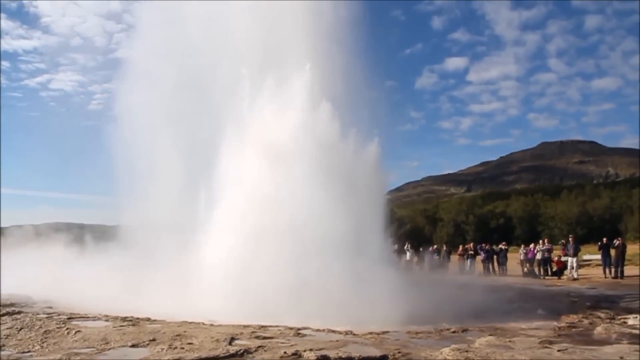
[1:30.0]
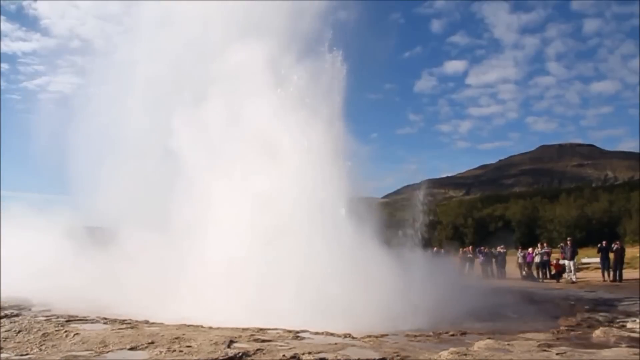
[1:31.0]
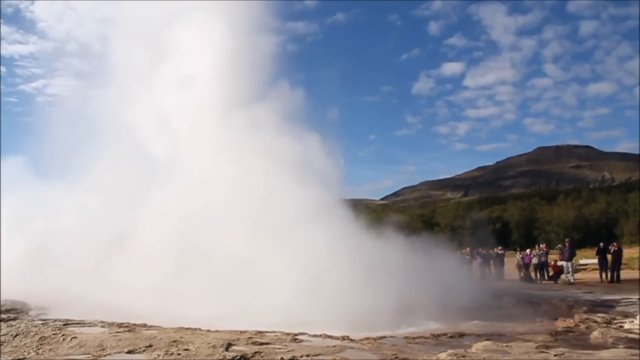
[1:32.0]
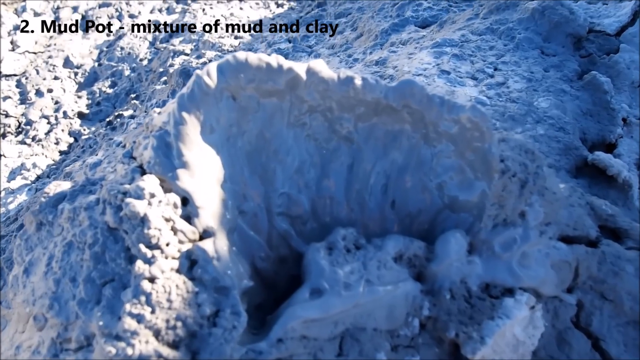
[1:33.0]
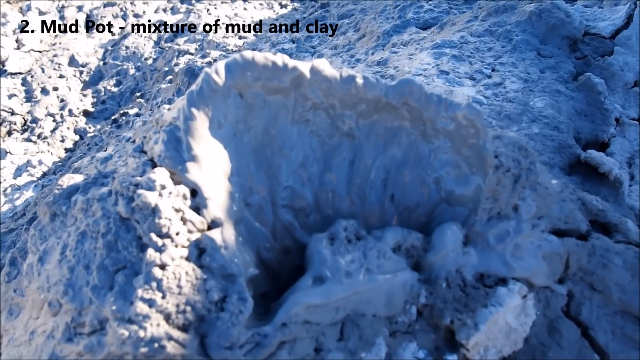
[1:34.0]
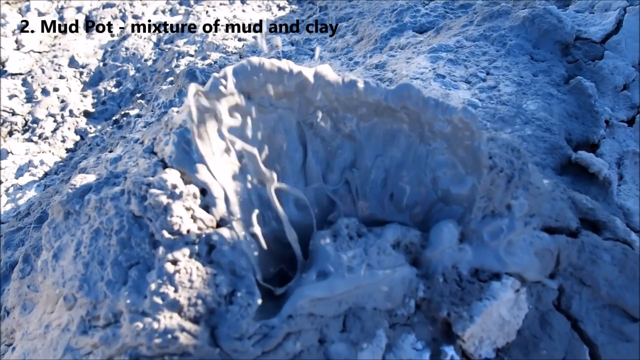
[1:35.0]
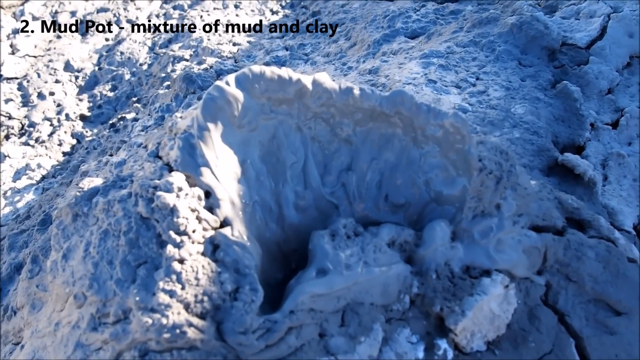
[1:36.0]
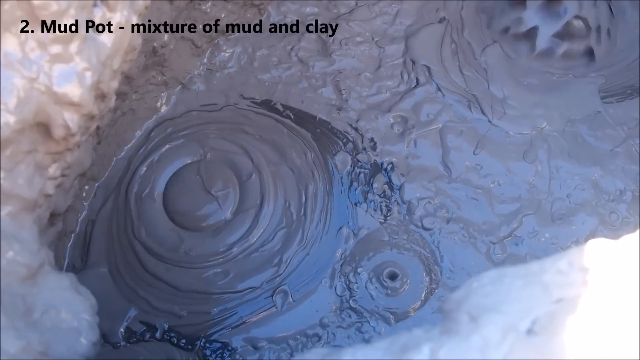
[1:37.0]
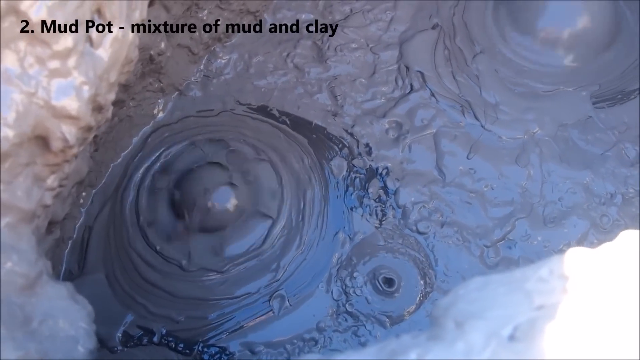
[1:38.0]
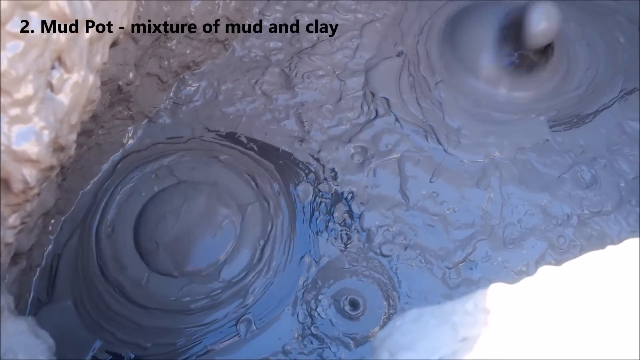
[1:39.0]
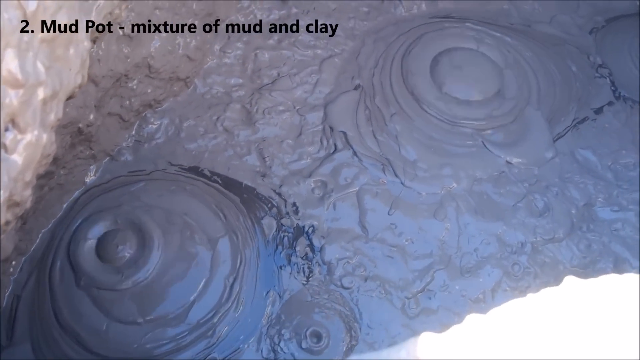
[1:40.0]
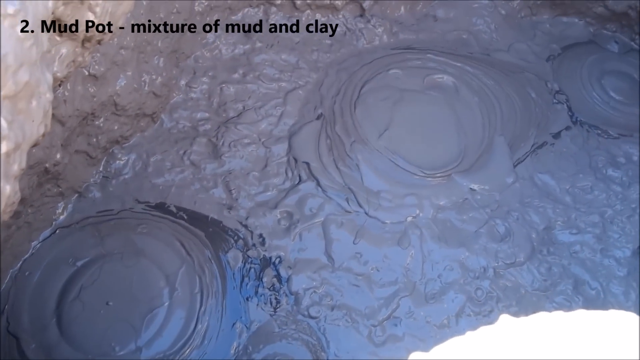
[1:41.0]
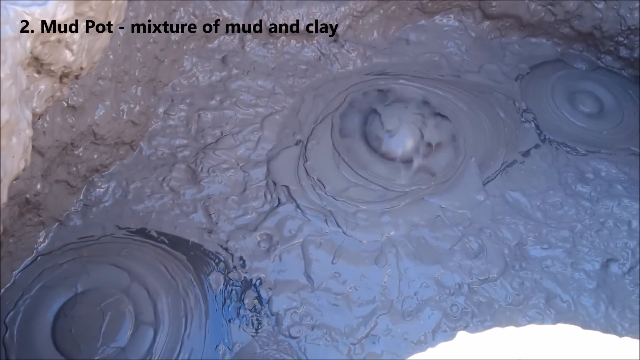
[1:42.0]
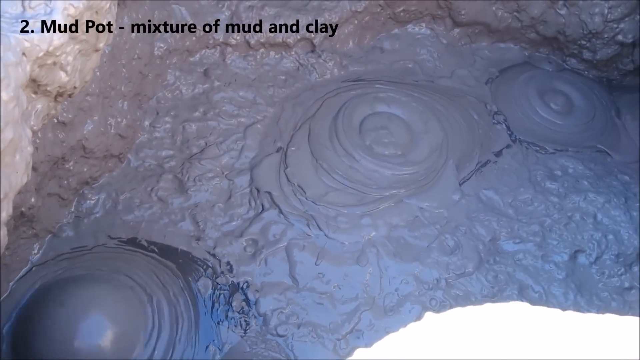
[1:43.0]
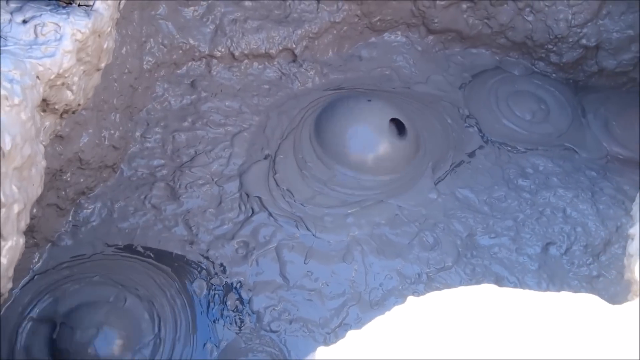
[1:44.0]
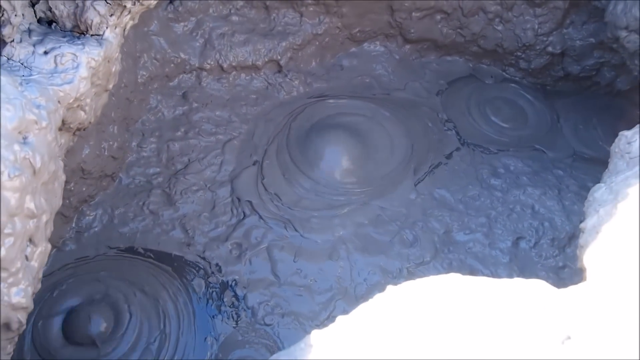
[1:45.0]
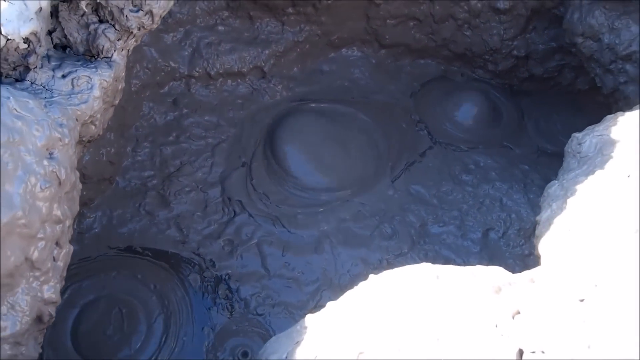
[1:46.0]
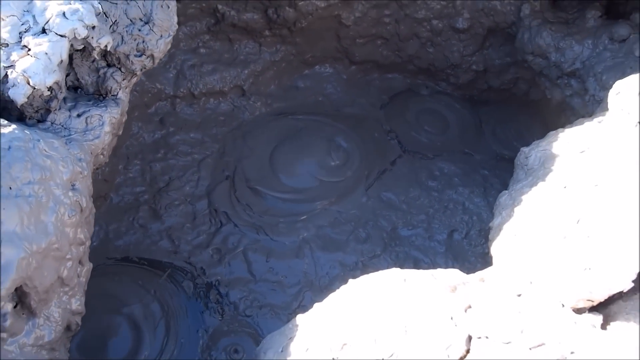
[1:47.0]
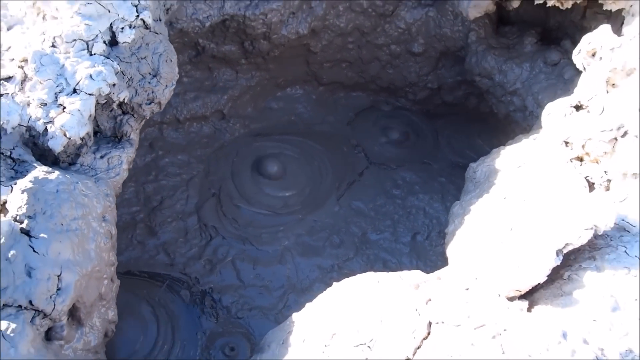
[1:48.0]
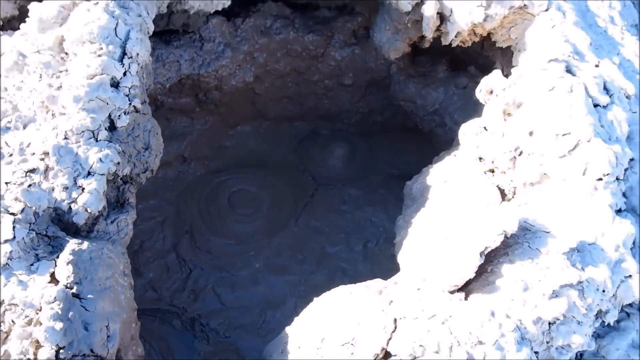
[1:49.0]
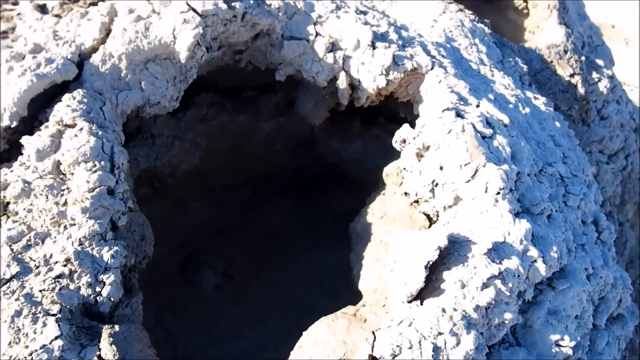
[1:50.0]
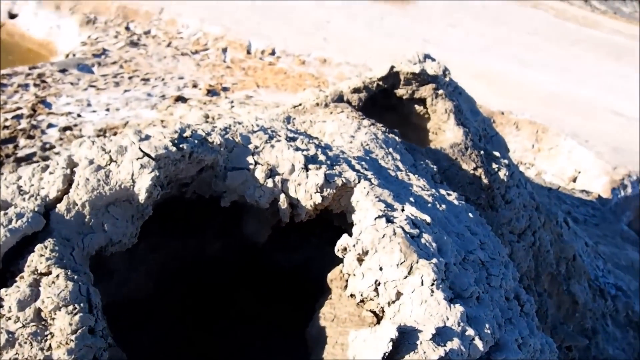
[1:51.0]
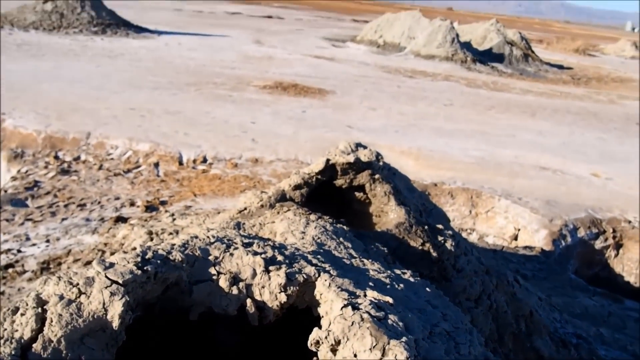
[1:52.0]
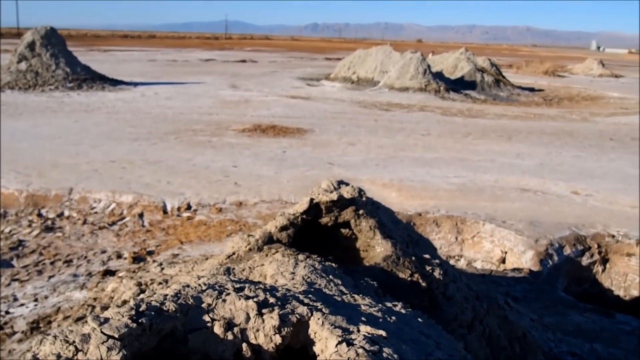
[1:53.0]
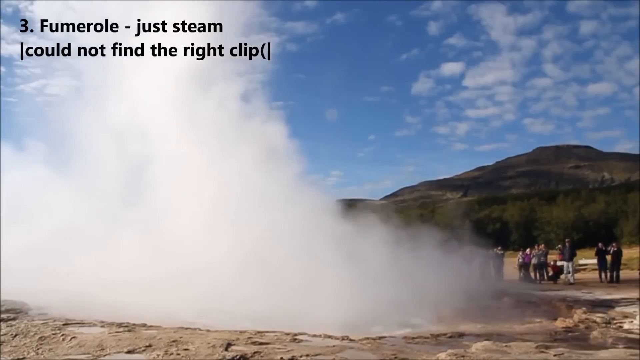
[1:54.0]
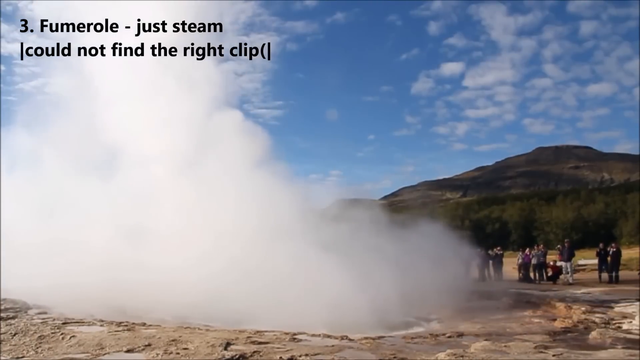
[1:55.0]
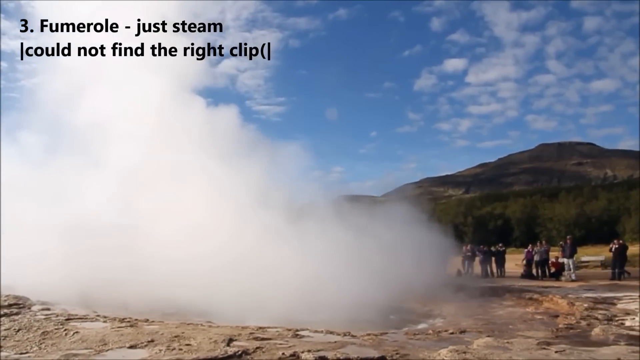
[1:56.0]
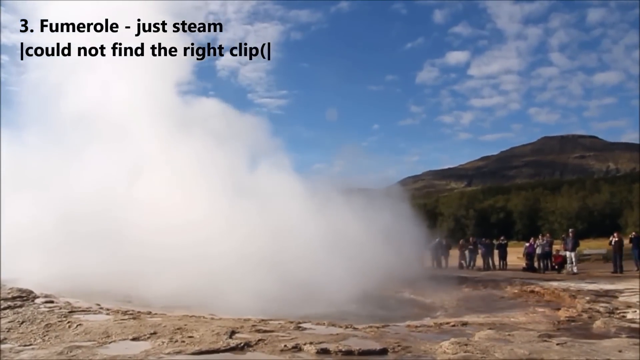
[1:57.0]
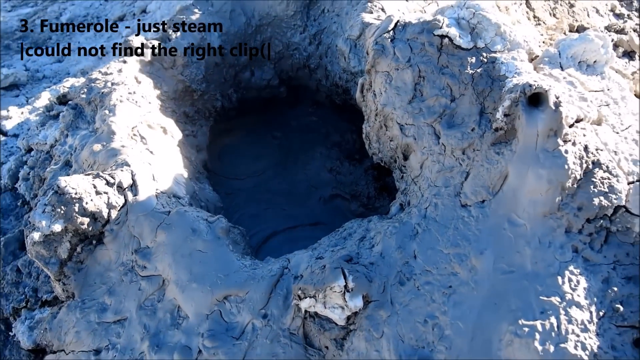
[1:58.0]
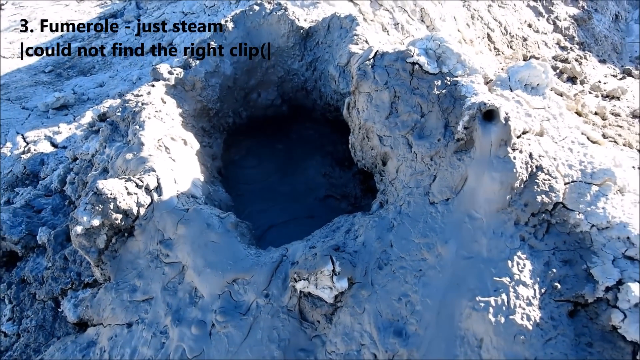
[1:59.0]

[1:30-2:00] The geyser continues making its jet against a cloudy blue sky, with hills and trees in the background and people taking shots of it. Another type of hot spring follows, with text reading "2. mud pots, mixture of mud and clay." Inside a hole, brown mud and clay are bubbling; the hole is inside a gray, almost white formation of rocks. The landscape looks pretty dry, with mostly brown ground and not much vegetation. The video then cuts back to the jet, and text at the top reads "3. fumerole - just steam [could not find the right clip]."